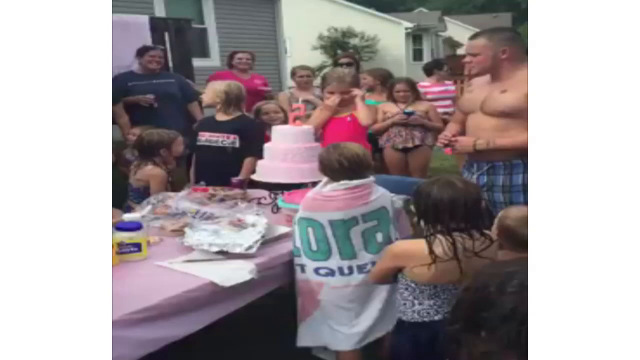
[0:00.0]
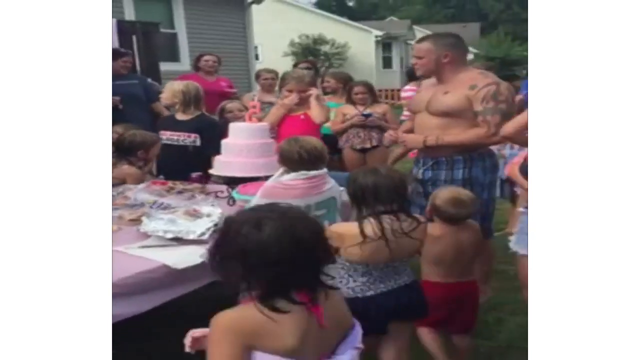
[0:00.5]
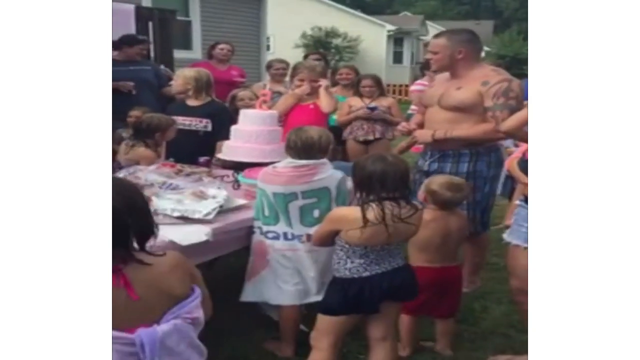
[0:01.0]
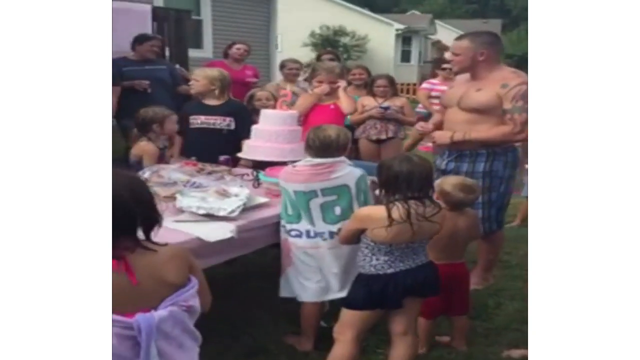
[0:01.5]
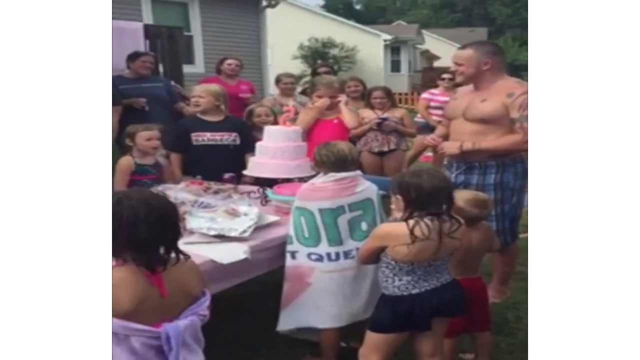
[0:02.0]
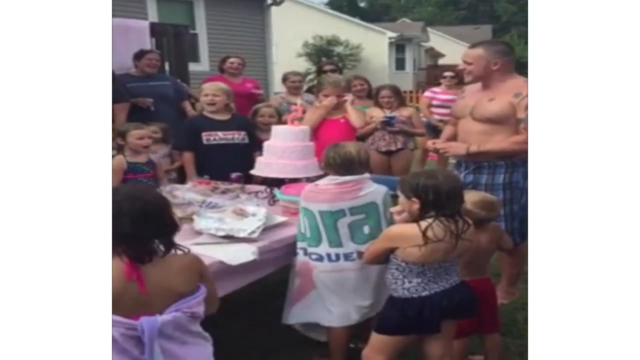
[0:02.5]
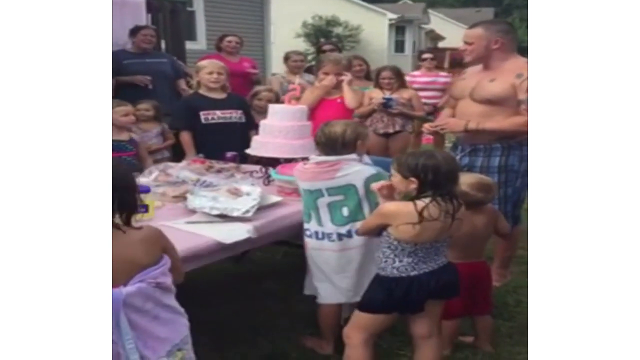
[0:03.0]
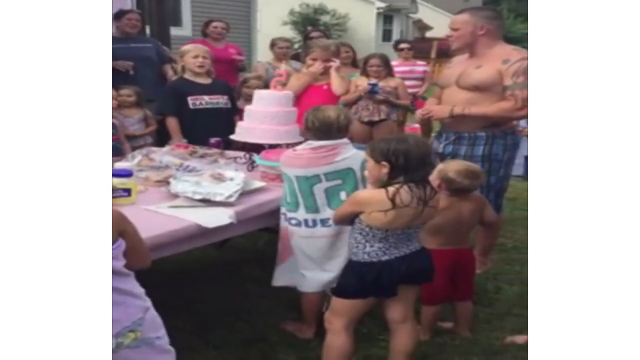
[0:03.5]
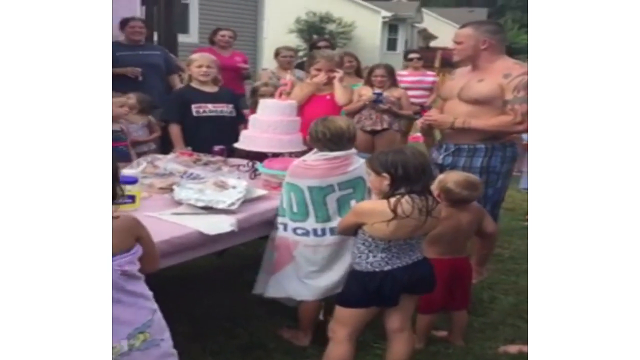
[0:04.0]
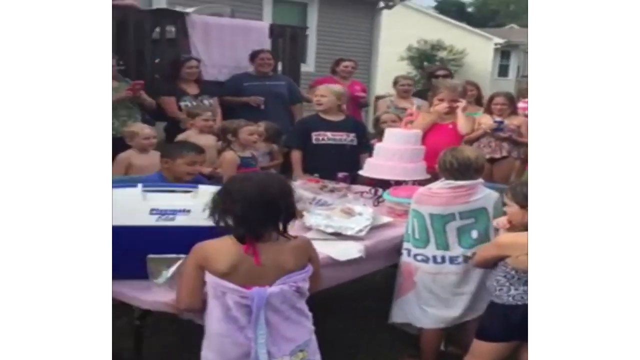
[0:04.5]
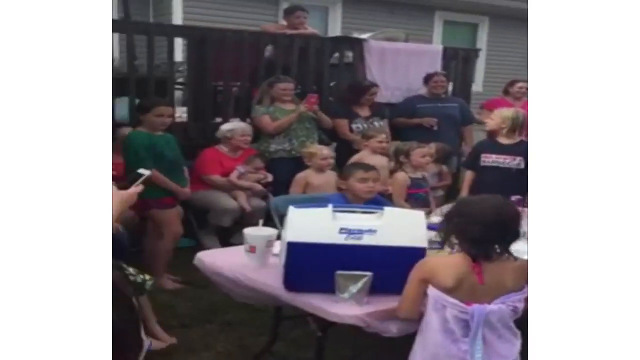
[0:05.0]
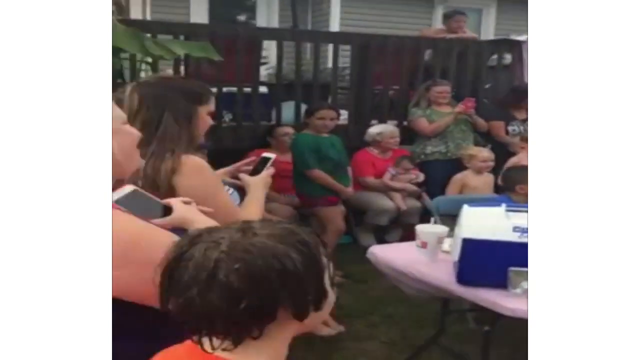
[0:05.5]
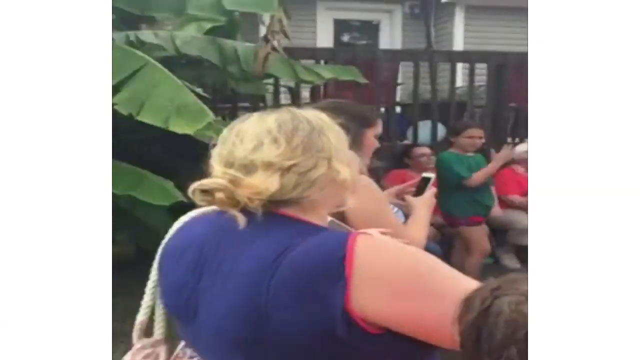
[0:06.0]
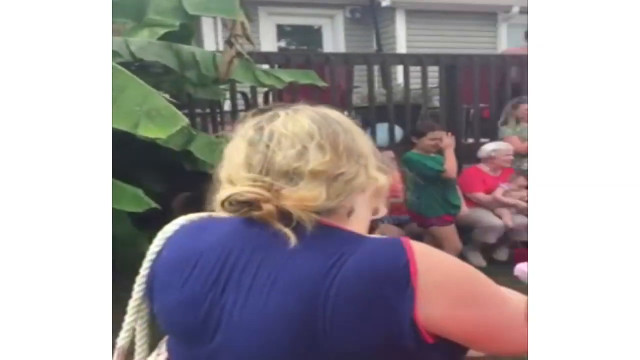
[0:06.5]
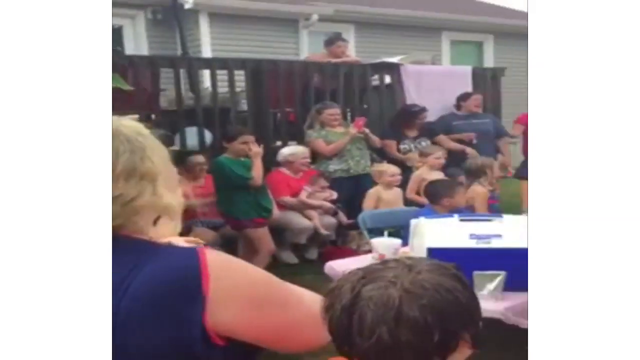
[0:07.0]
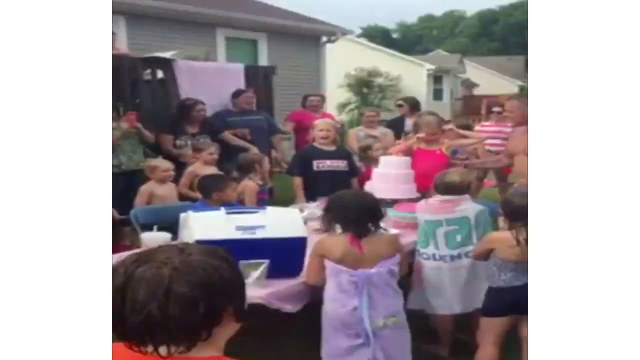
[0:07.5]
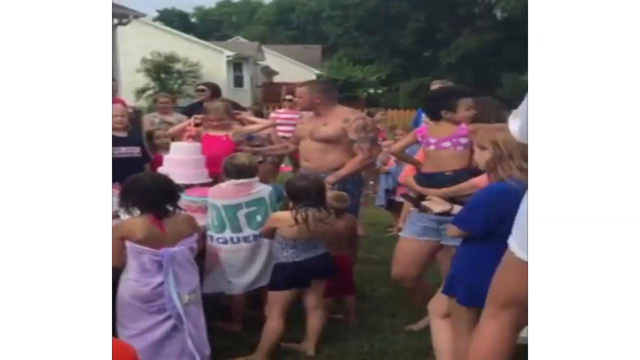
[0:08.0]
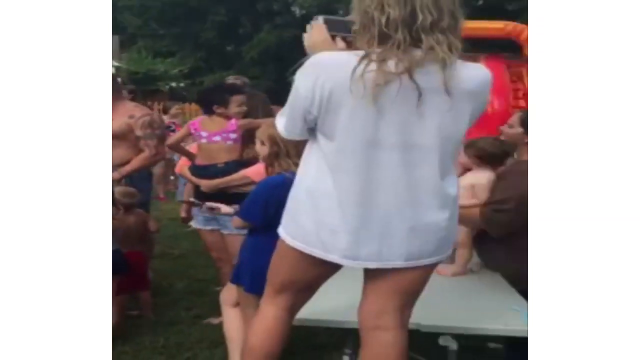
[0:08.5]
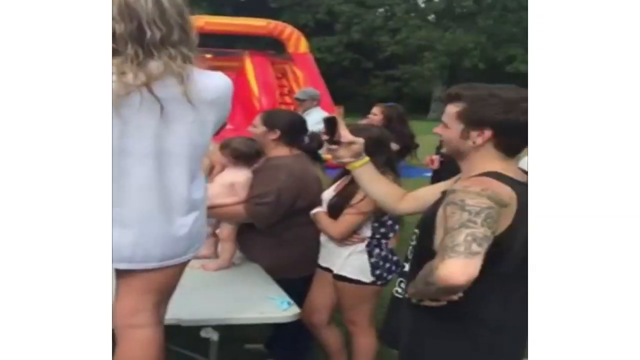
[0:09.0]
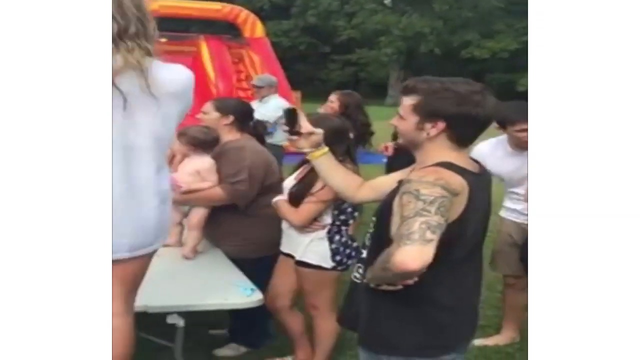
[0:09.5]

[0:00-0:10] People are at a party and are enjoying themselves. The party looks like it is for a young child who has a flag wrapped around her. The cake is pink, and the theme of the birthday party is also pink. Various people appear, including children who are shirtless. A shirtless man wears blue trousers, and there is a big tattoo on the left side of his hand. On the table there is a blue and white box, along with many other things. A woman with gray hair wearing a blue dress is happy to be at the party. Another woman wears a white head top, and a man at the back with a tattoo on his hand is taking pictures.